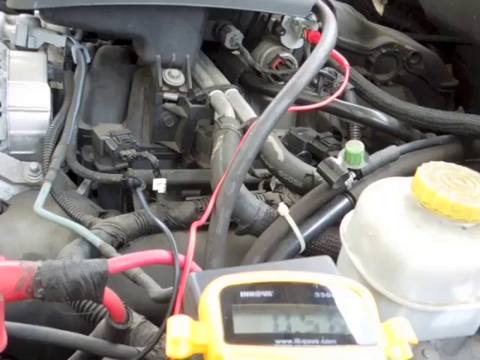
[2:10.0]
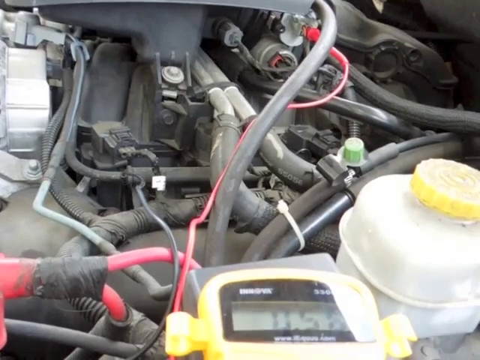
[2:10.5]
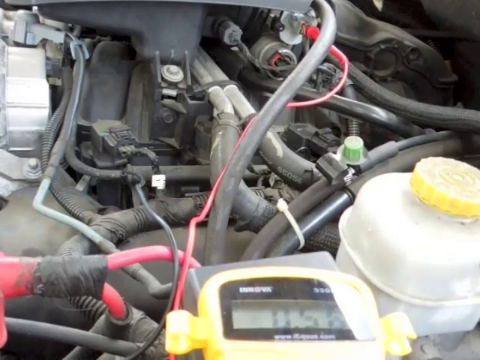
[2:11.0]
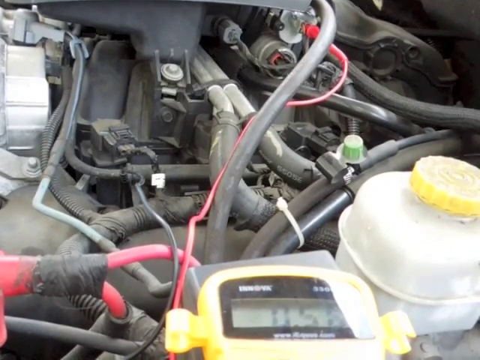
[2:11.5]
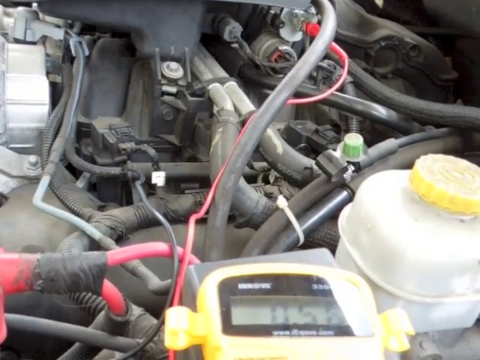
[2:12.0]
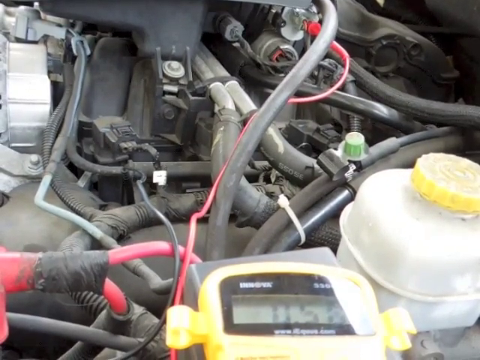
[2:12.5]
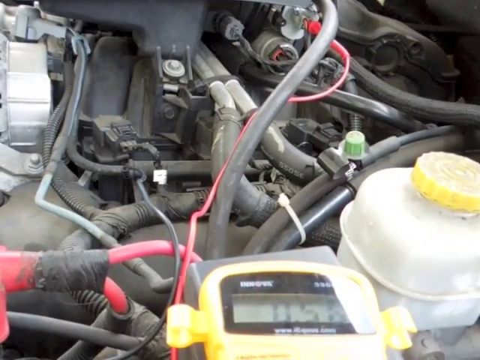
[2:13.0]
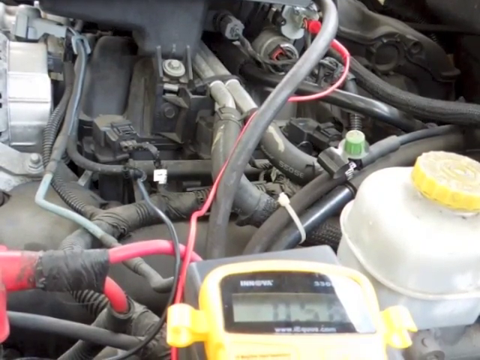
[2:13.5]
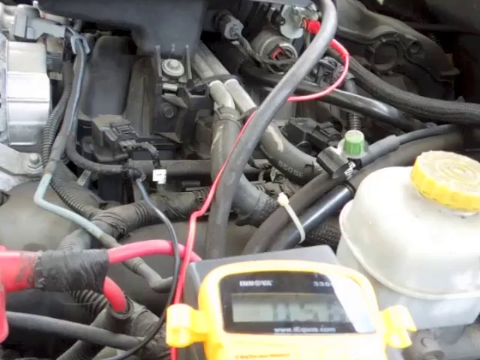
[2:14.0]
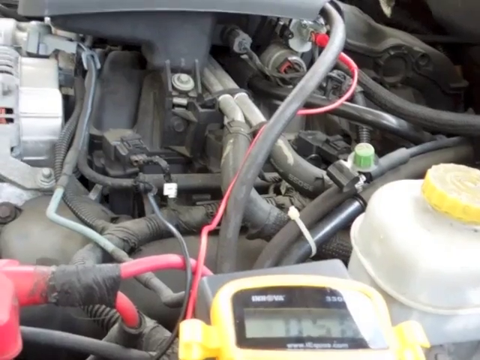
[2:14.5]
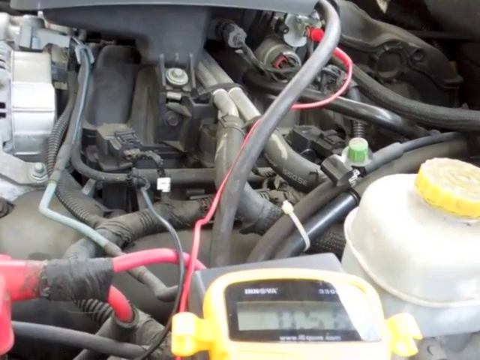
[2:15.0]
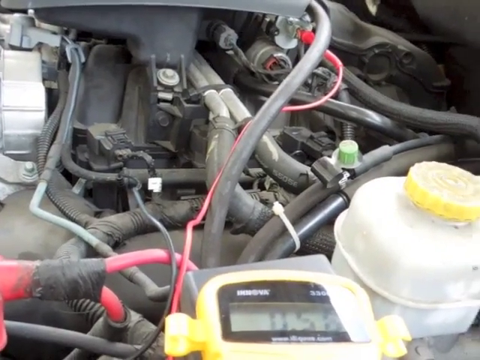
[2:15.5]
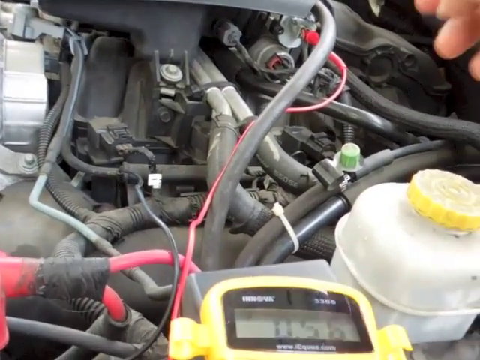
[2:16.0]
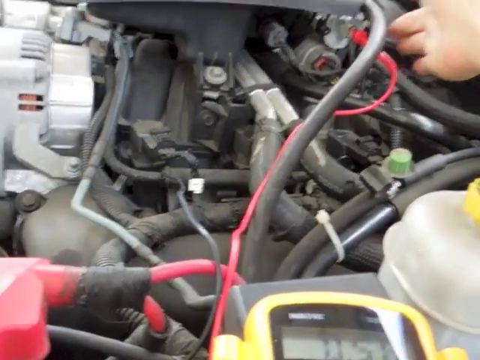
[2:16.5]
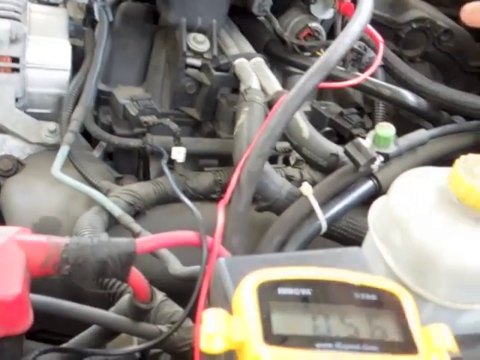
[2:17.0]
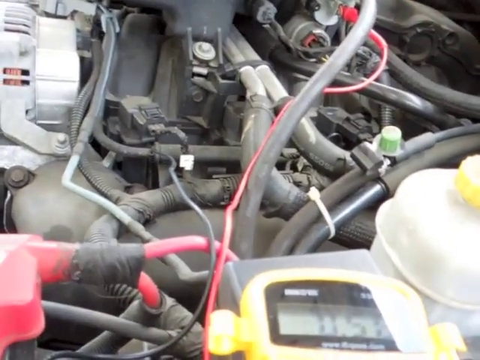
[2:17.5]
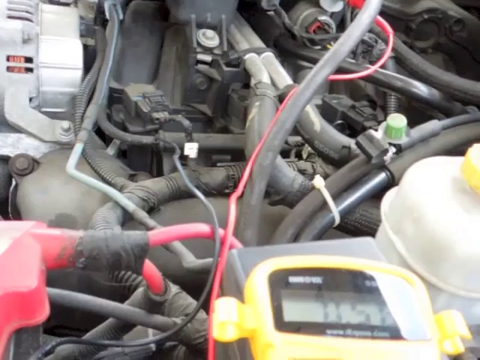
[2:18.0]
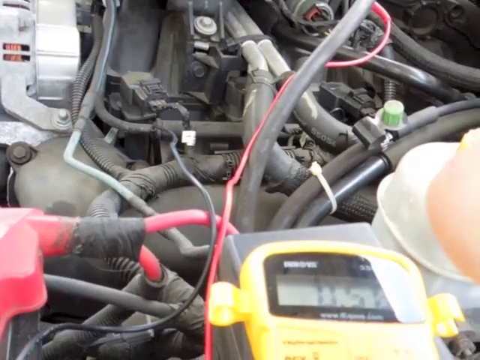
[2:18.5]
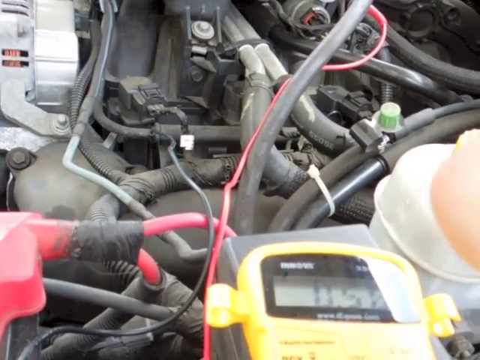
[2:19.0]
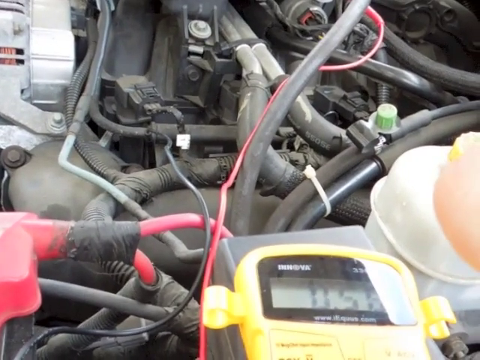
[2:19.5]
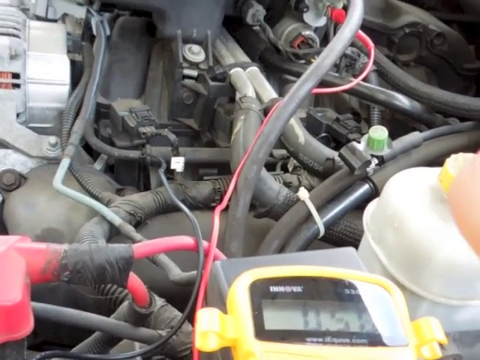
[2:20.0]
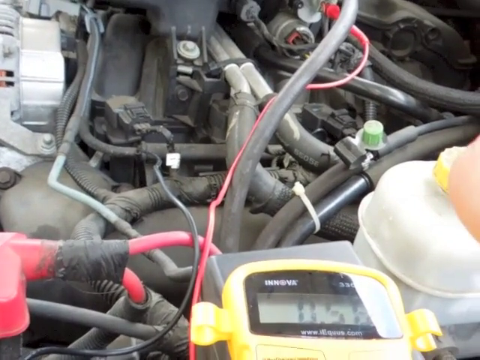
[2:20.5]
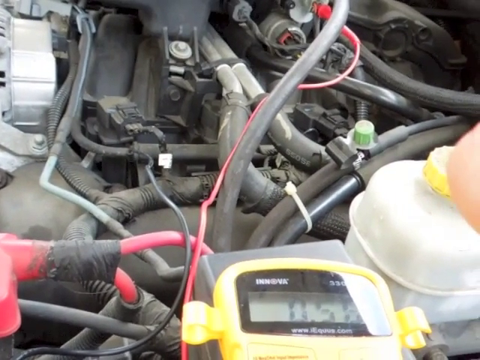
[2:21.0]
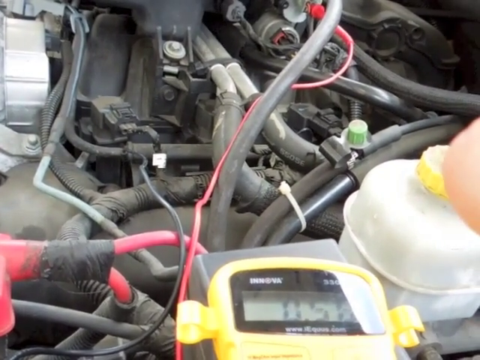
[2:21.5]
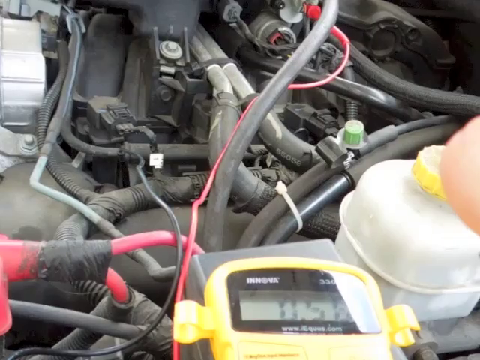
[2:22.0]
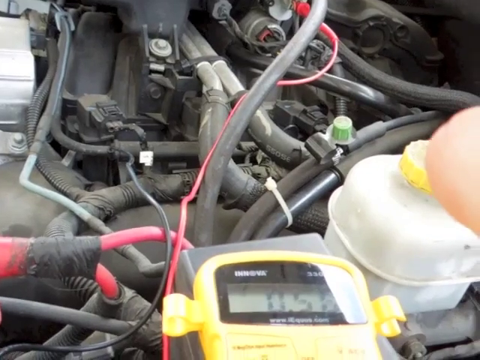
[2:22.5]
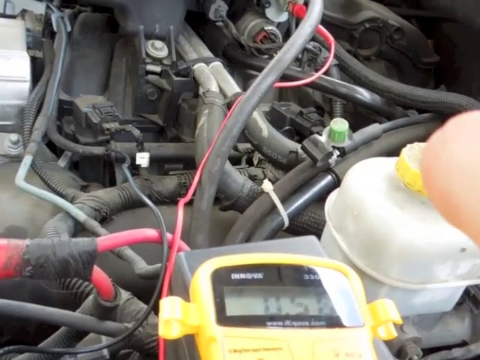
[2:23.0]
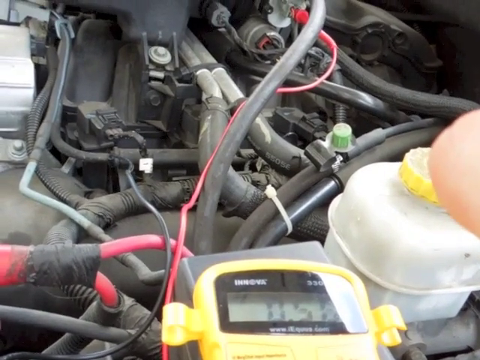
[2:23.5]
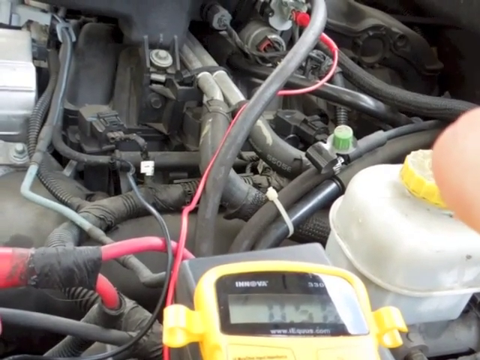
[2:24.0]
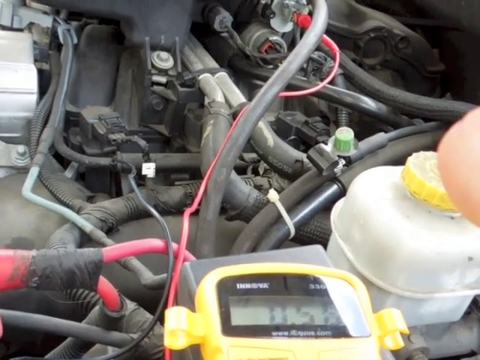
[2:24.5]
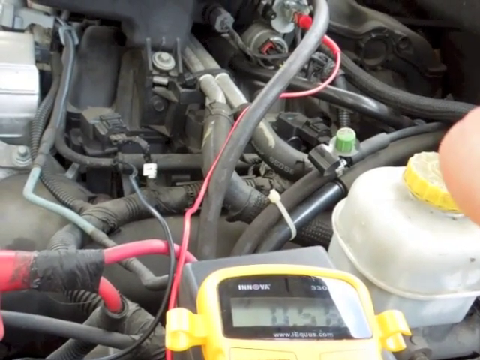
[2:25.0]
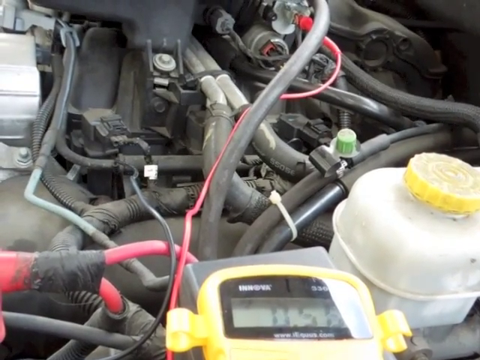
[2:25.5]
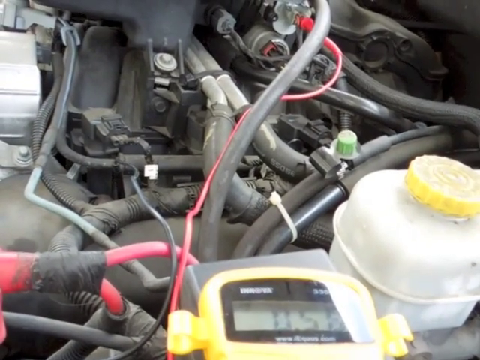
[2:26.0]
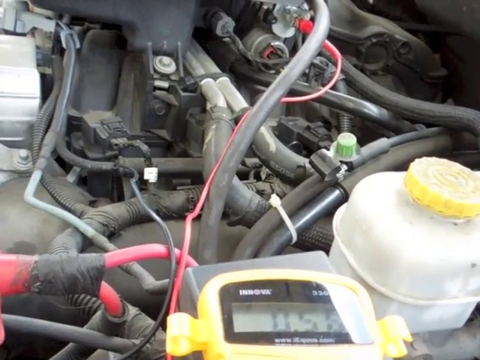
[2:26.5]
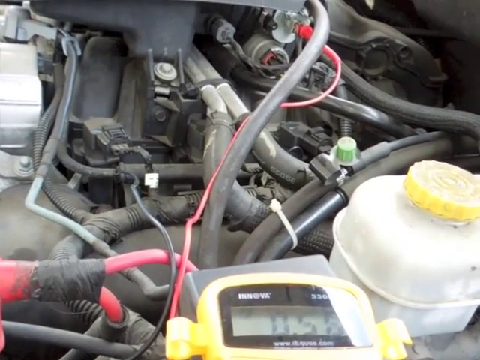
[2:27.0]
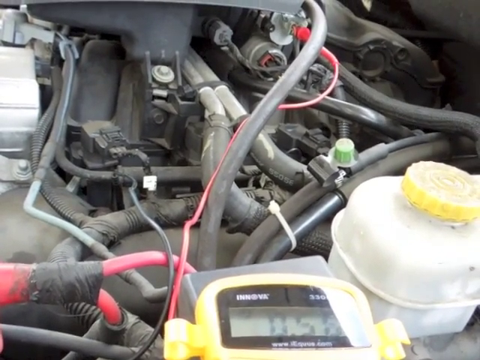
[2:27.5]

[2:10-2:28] The engine compartment is viewed from the side. The "INNOVA 3300" multimeter rests on an area of the engine next to the white plastic fluid reservoir with the yellow cap. Numerous metal and rubber hoses, fittings, connectors and electrical wiring fill the compartment in the distance. On the left are parts of the metal housing of the alternator, and at the top is plastic from the shrouds over the air cleaner area. The mechanic's hand moves in from the right, touching the connectors, switches and possible sensors behind the air cleaner area. The red probe of the multimeter is clearly visible in the center wire of the top three-wire connector behind the central part of the engine compartment, while the black ground probe runs off into the distance and disappears down into the engine components, where it touches a metal strut for a ground. The mechanic's hand moves in again and taps the area of the red probe. The video ends with a still view of the engine compartment, the white plastic reservoir with yellow cap in the lower right corner and the multimeter just to its left, set at 20 on DCV.